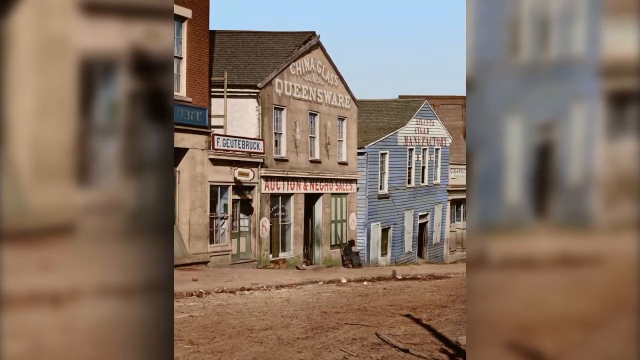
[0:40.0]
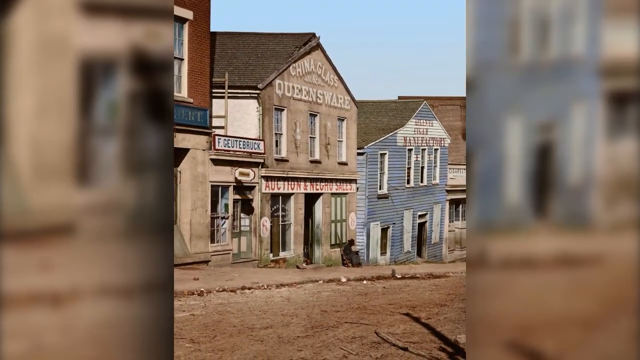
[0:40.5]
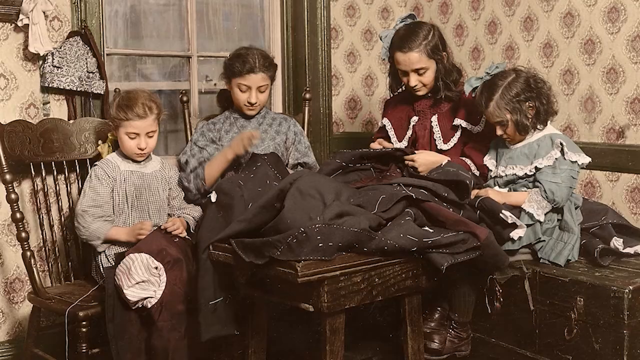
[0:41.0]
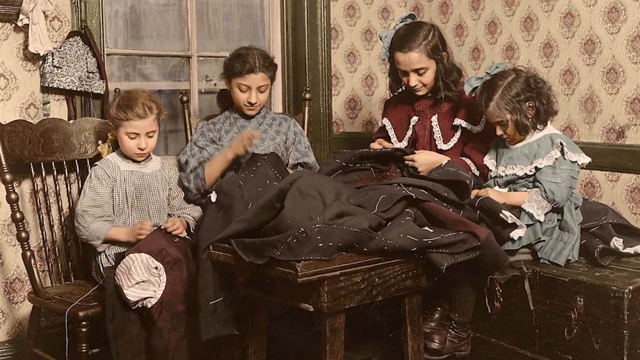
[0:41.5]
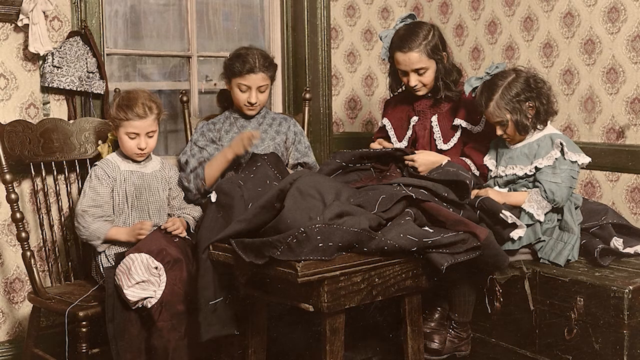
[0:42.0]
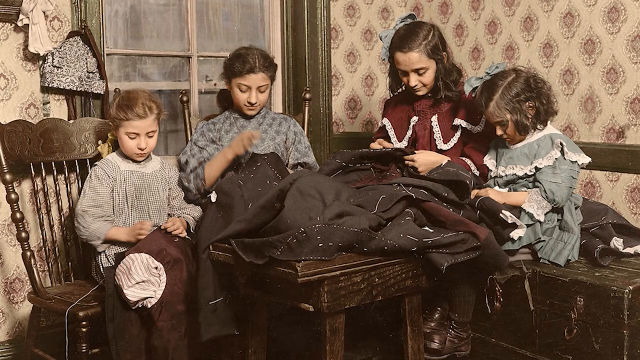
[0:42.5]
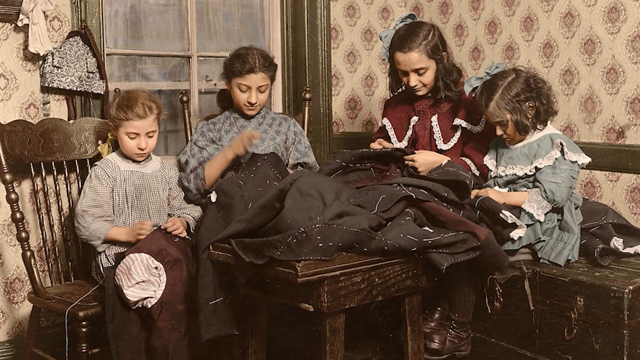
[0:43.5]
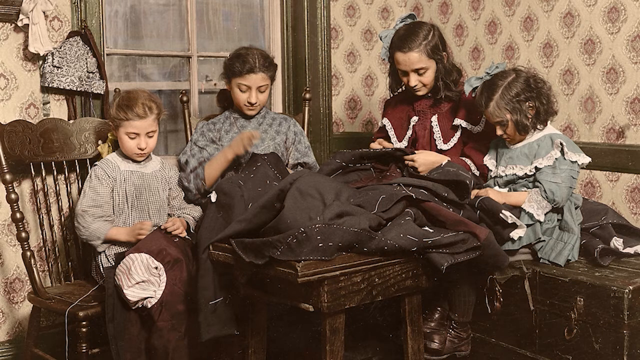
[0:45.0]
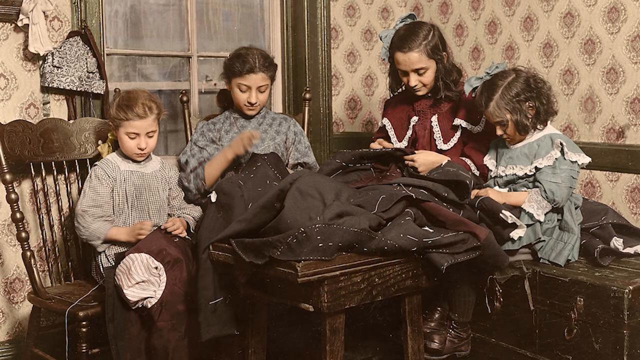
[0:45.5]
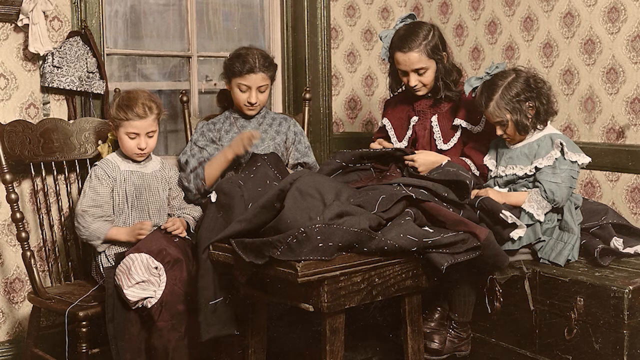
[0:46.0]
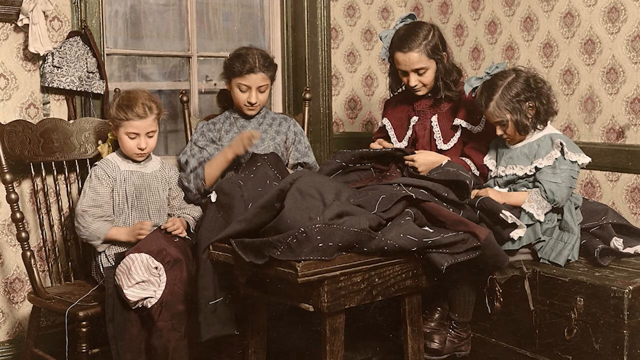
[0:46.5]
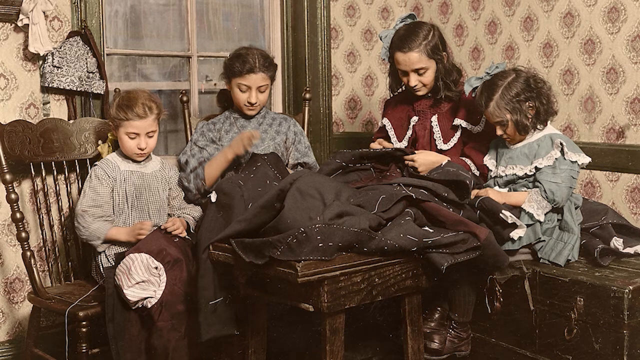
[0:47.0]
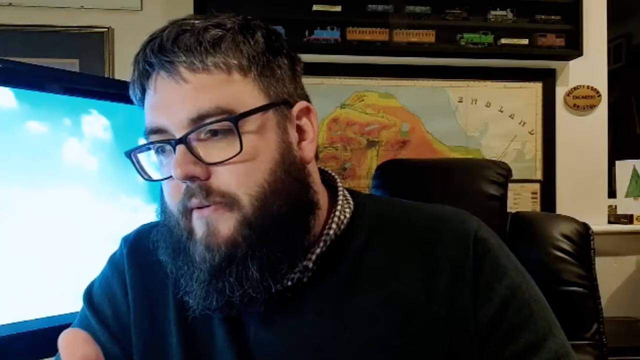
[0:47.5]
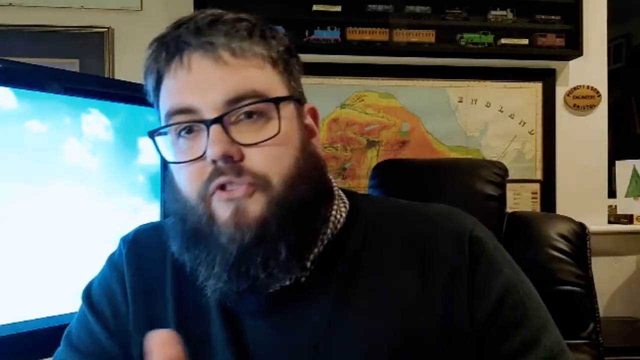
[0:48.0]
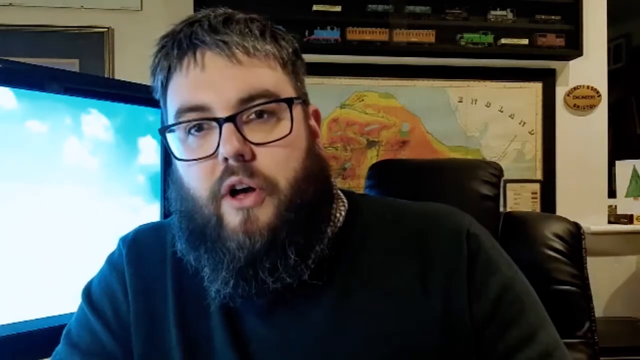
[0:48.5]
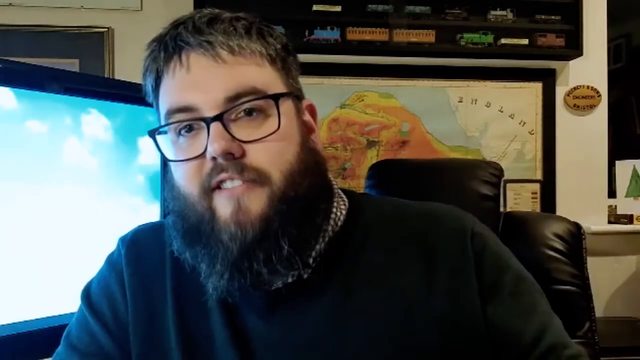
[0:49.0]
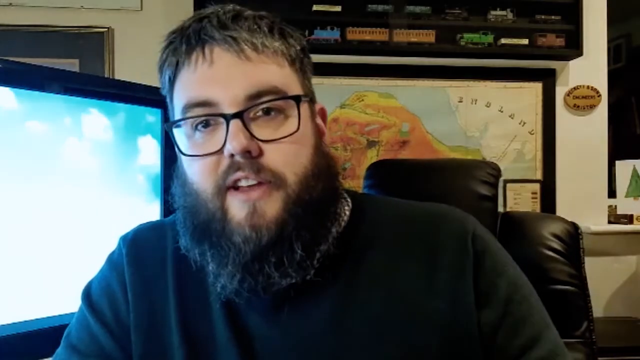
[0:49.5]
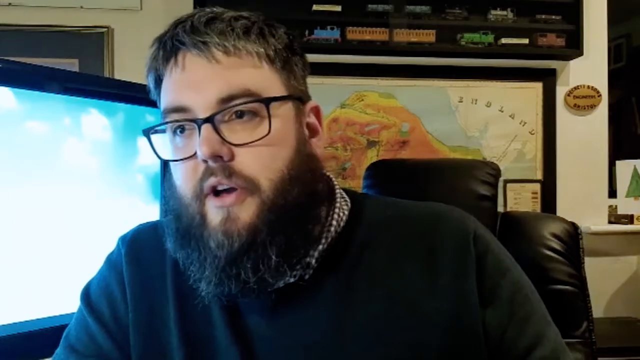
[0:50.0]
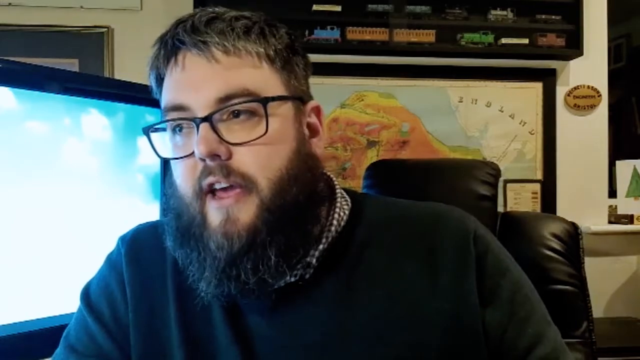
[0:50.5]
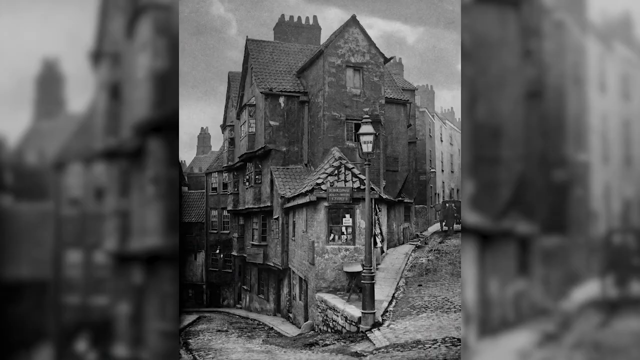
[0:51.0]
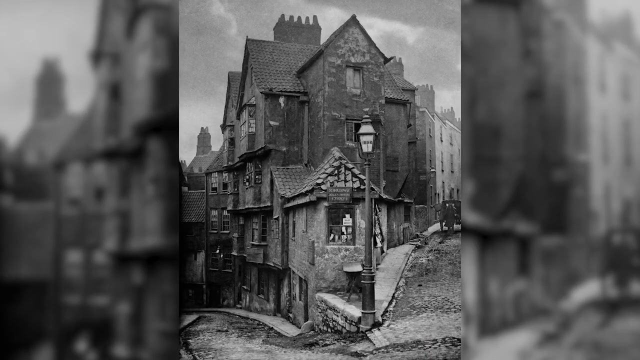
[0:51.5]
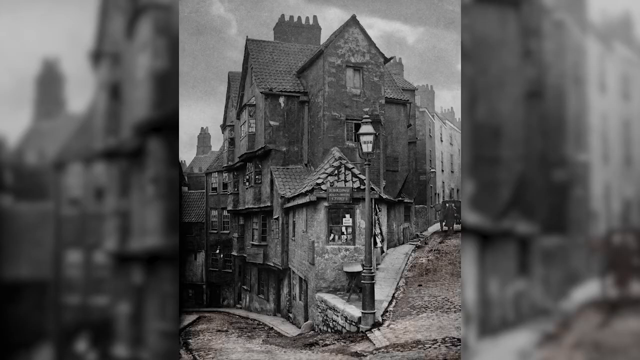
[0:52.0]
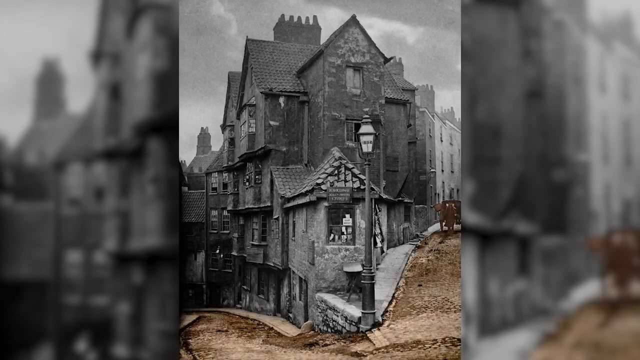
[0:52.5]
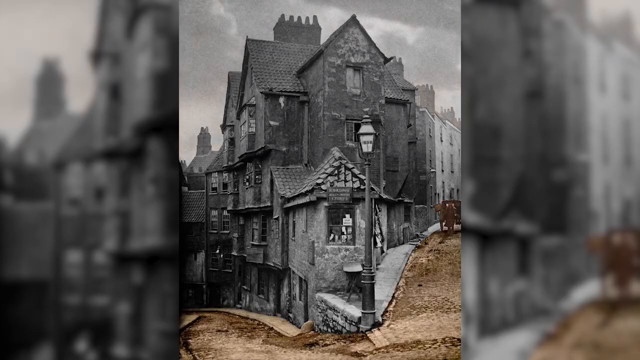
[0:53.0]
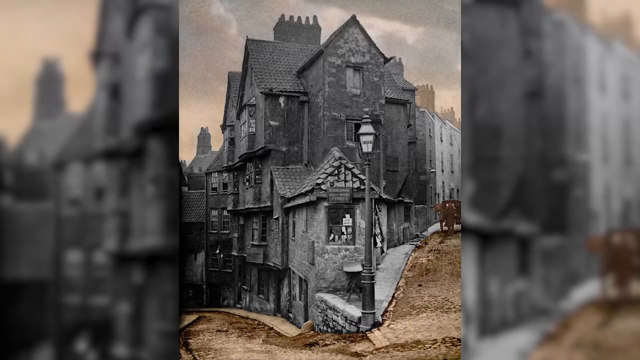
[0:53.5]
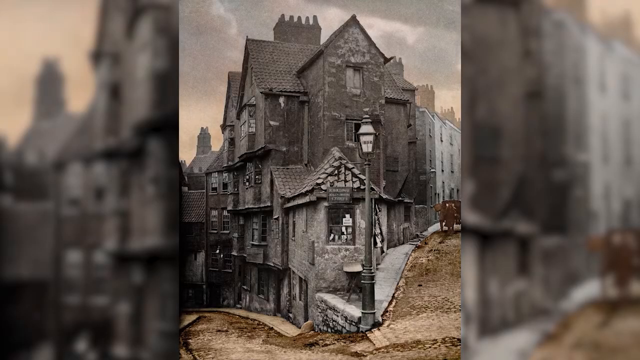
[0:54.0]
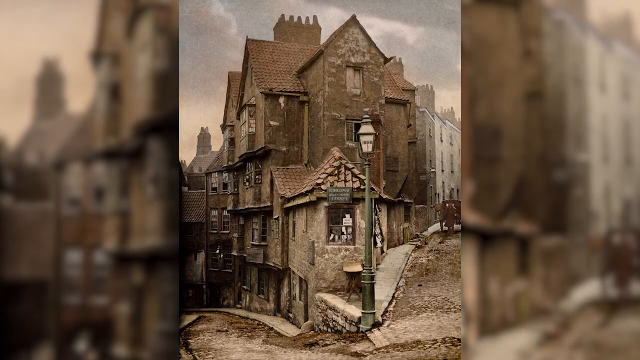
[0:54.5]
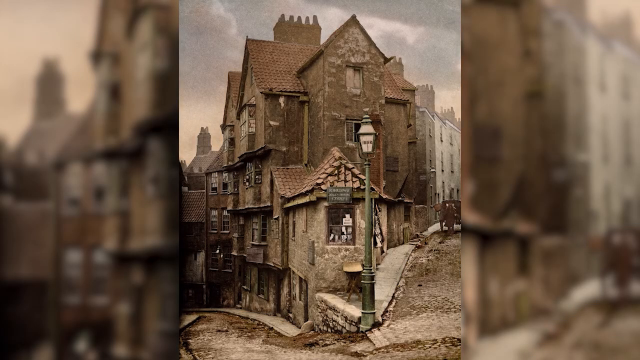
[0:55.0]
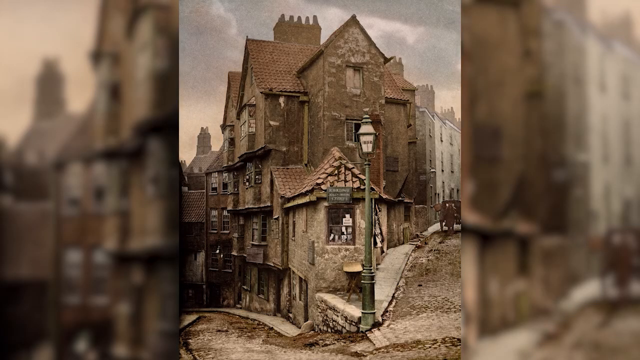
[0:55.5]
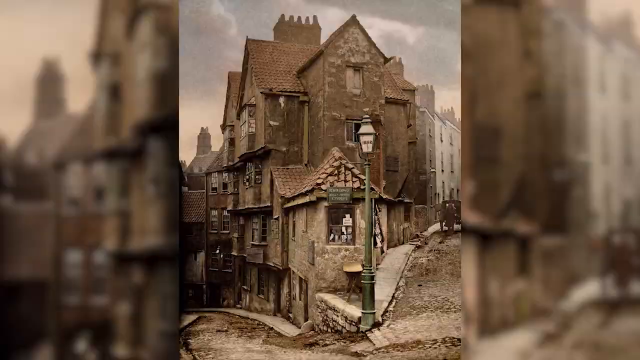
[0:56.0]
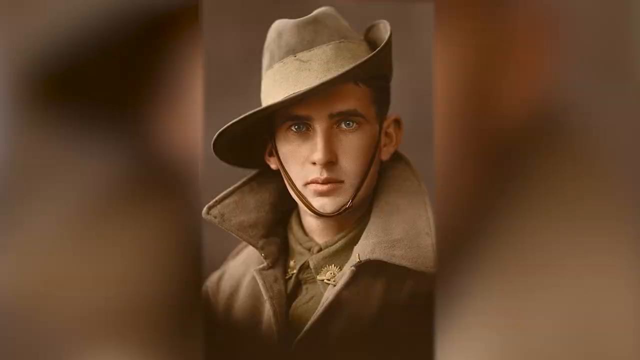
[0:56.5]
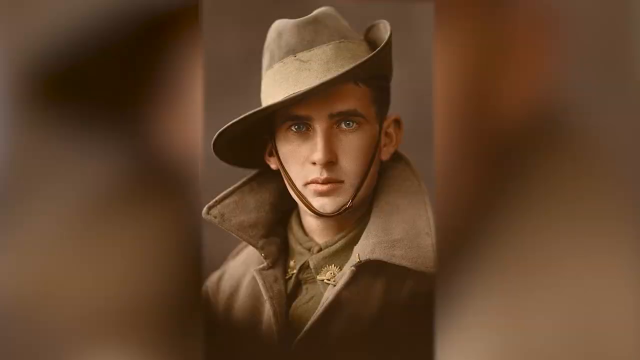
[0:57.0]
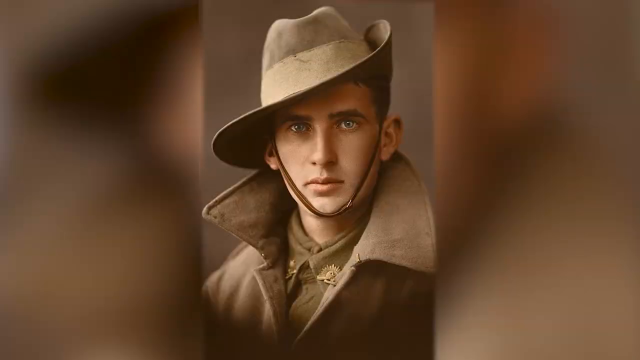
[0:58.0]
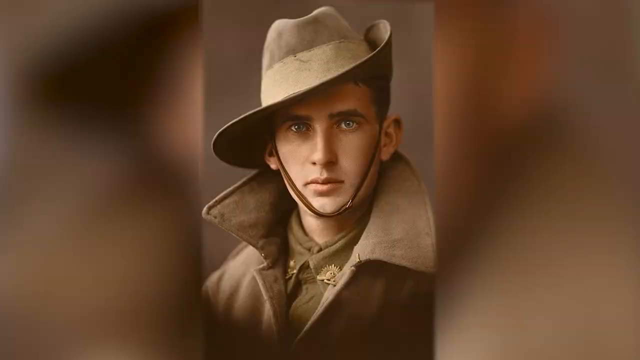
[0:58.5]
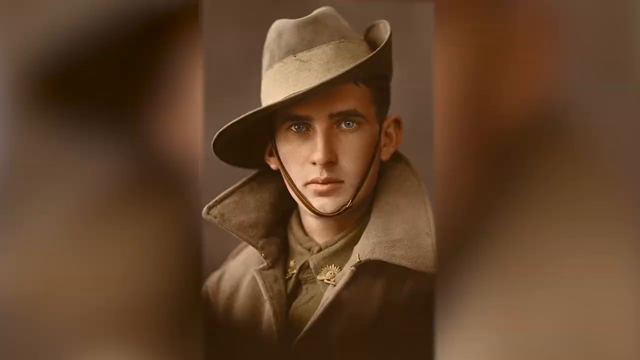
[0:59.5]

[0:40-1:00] An indoor color photograph shows brown chairs, a brown table and four kids in a room with patterned wallpaper next to a window. One kid wears a burgundy dress with white on it, two are in gray, and one is in a bluish color. They are sewing clothing, and the view focuses on them. The video returns to the man with the beard and glasses, the computer screen and the map behind him, wearing a black sweater or shirt and talking. Next is an old black-and-white picture of a very large building that almost looks like a castle, under gray skies, with what almost looks like a horse and buggy to the right, though it might be a vehicle. The picture changes to color: the skies are gray and the building is more of a brownish color. Then a white man with blue eyes, possibly a soldier, appears wearing a hat with his collar up, before the video returns to the man with the glasses.